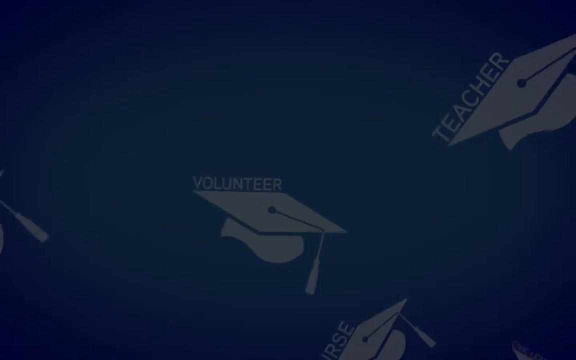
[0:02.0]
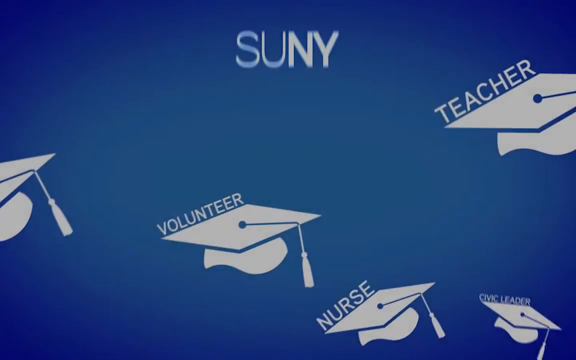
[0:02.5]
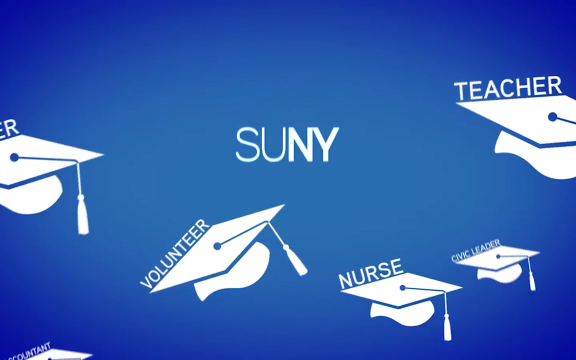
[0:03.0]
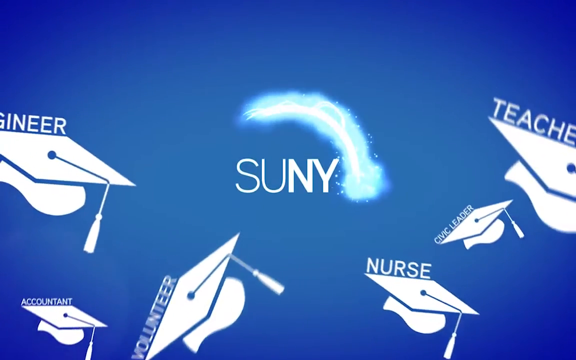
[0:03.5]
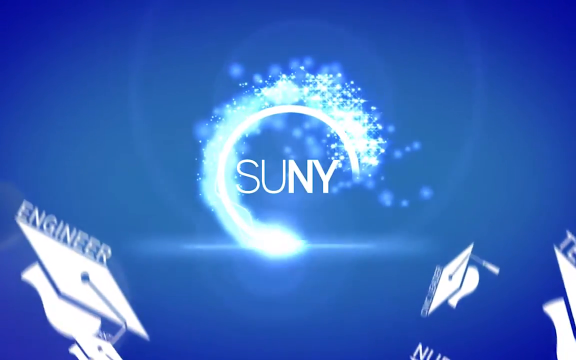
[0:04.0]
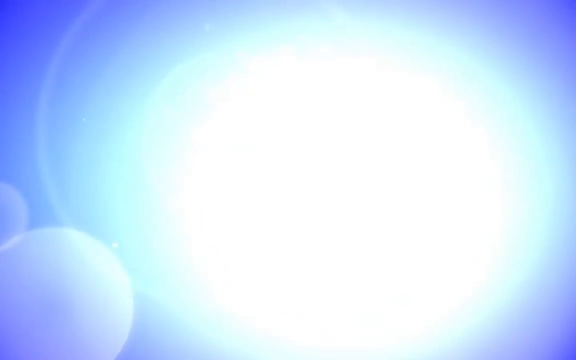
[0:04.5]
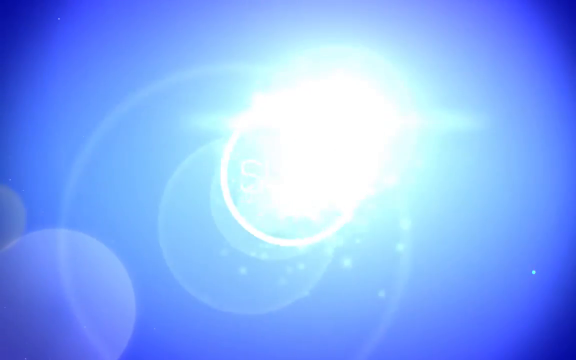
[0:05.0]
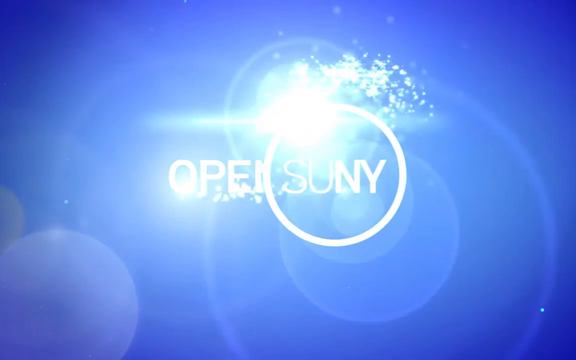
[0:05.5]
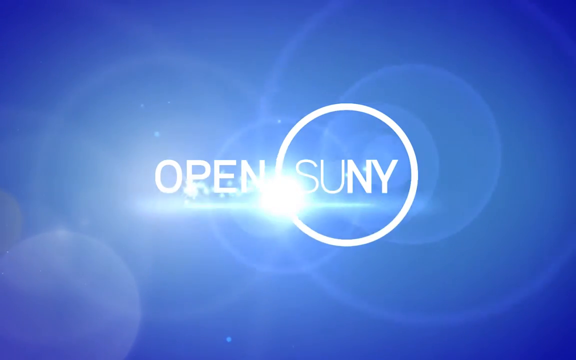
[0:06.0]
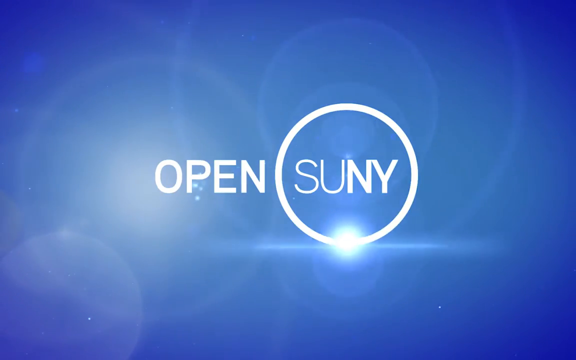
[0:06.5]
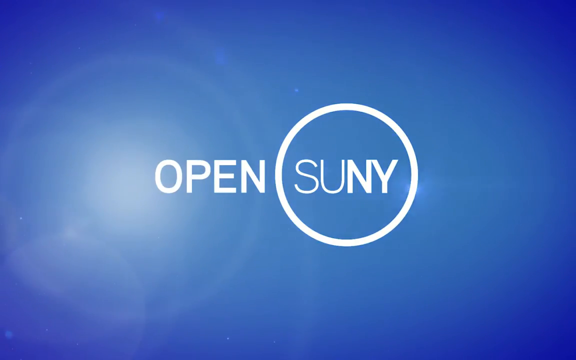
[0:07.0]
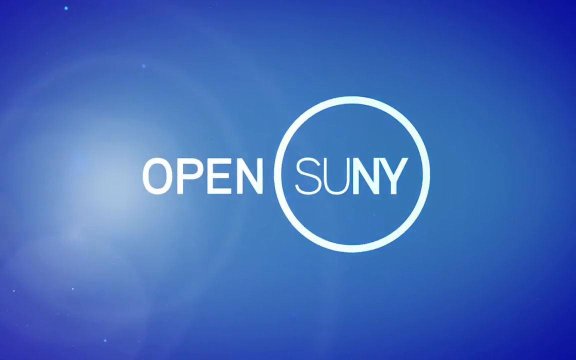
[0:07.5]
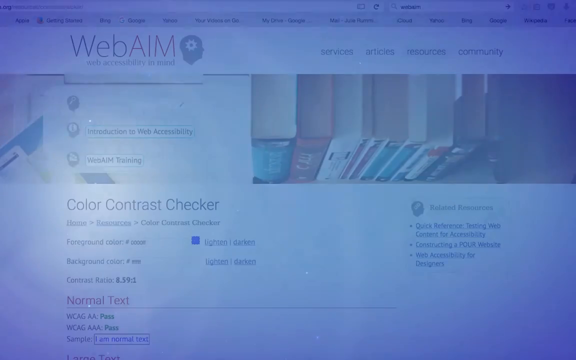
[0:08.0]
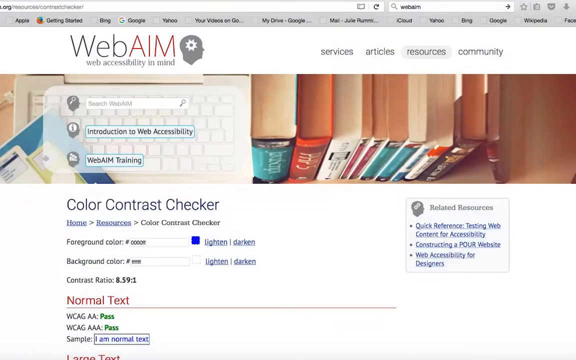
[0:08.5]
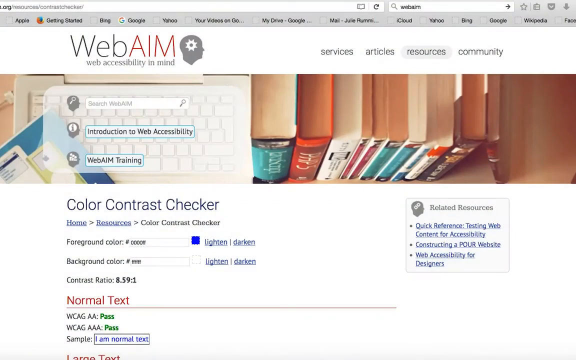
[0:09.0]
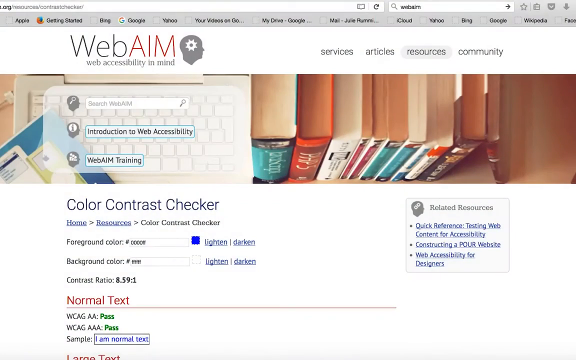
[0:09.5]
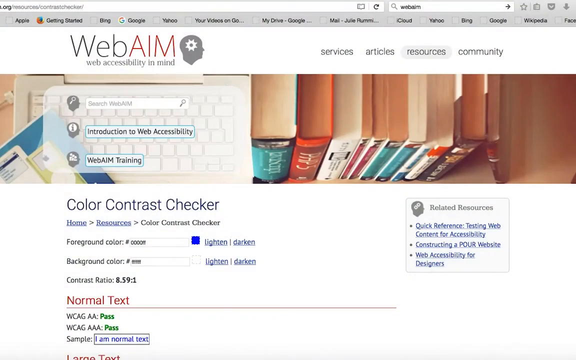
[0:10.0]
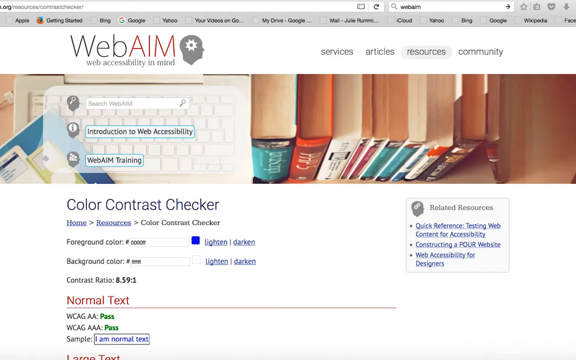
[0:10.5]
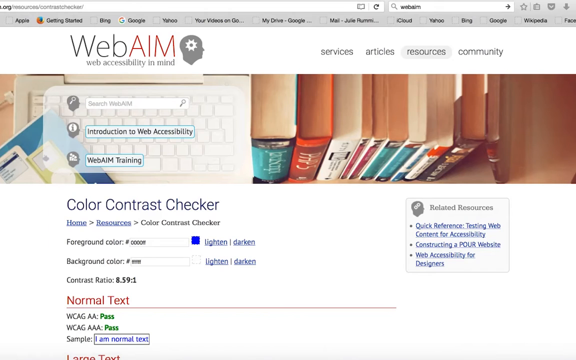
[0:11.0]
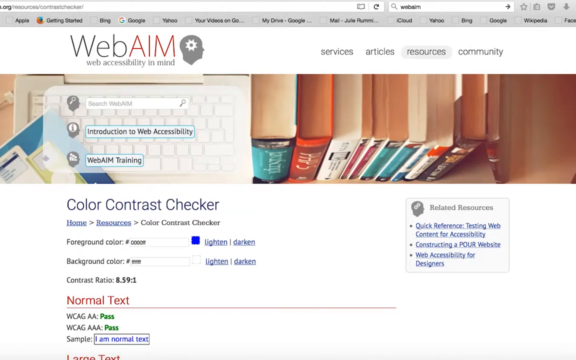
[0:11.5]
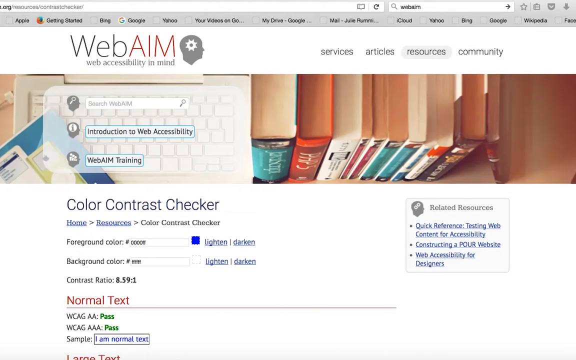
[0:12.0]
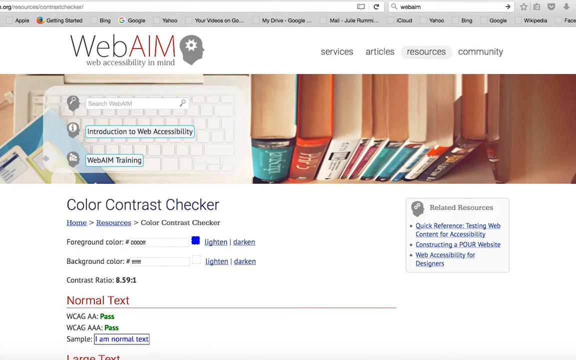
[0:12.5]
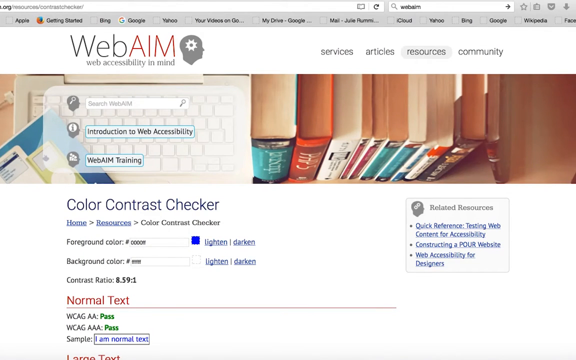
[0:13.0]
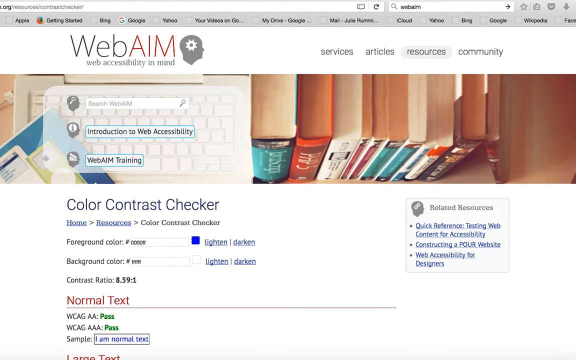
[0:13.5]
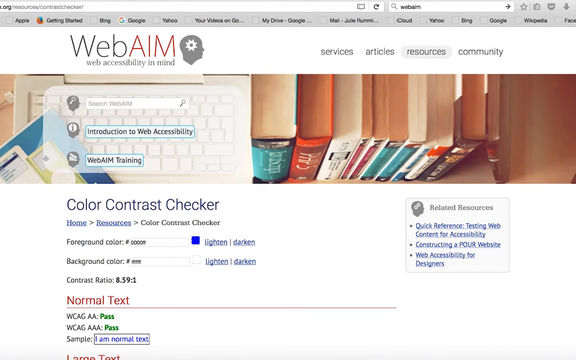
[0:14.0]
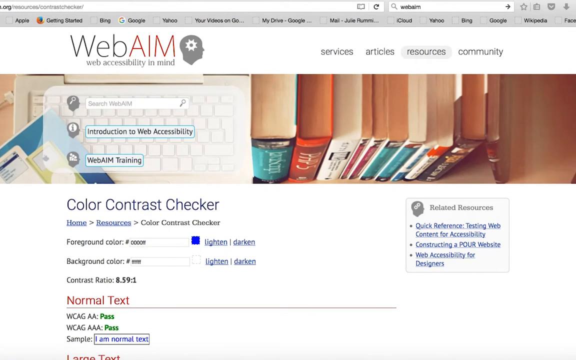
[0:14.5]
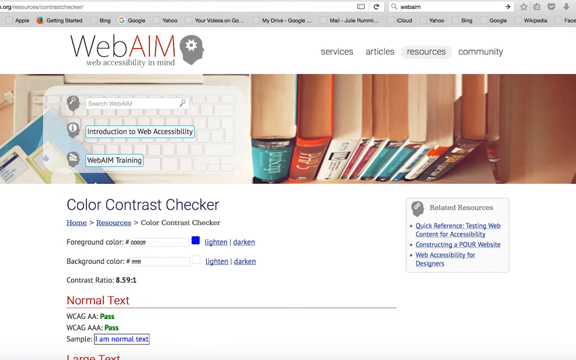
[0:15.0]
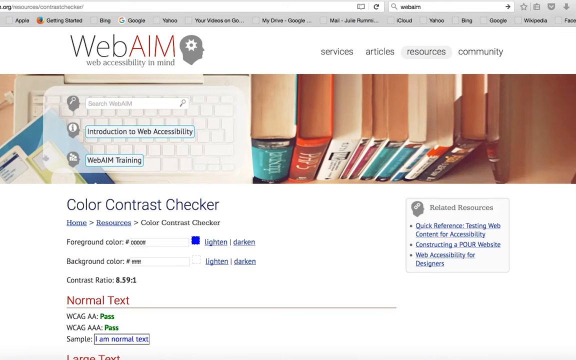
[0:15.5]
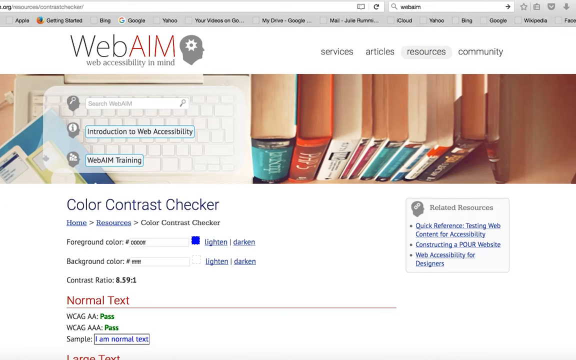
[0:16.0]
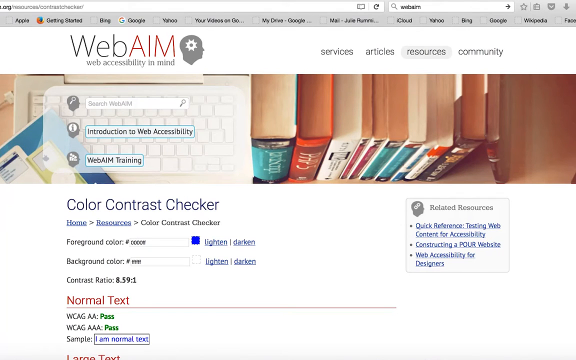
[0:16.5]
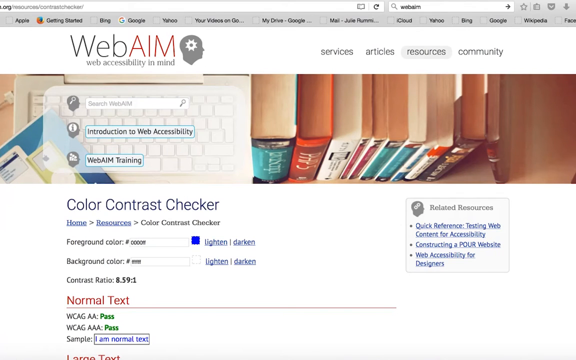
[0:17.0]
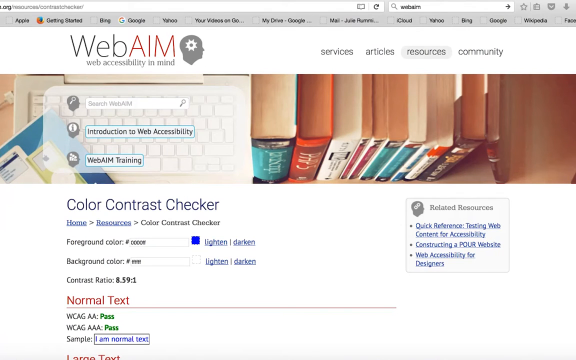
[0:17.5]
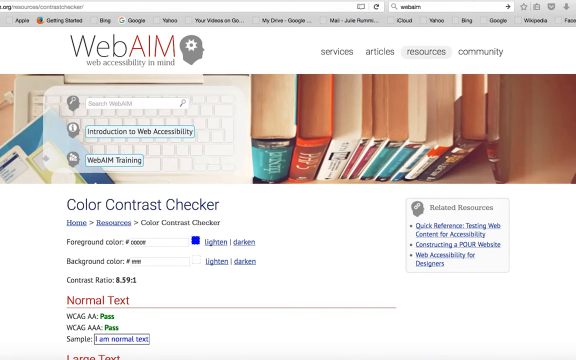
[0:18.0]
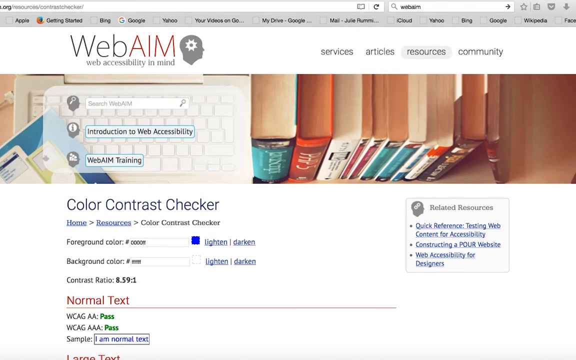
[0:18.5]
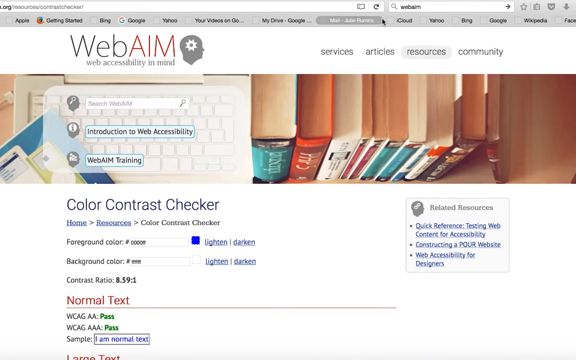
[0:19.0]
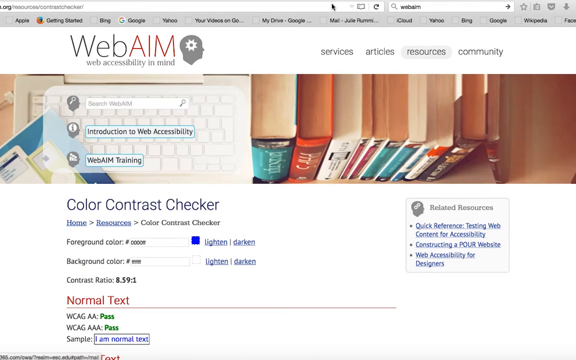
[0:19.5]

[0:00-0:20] The video opens on a blue background with swirling white logos. Each is a graduation cap with a name on top: "teacher," "civic leader," "nurse," "volunteer," and finally "engineer." In the middle is another logo, the word "SUNY" surrounded by a bright, star-like crest. It becomes a glowing brightness like starlight against the background, which turns pale blue. The image keeps swirling until it becomes the logo with the word "open" included, so "open SUNY" swirls in the middle. The video then transitions to a web page for WebAIM, "Web Accessibility in Mind," whose logo is the profile of a human head with a cog wheel inside it. Its banner shows the tops of books and a laptop keyboard.